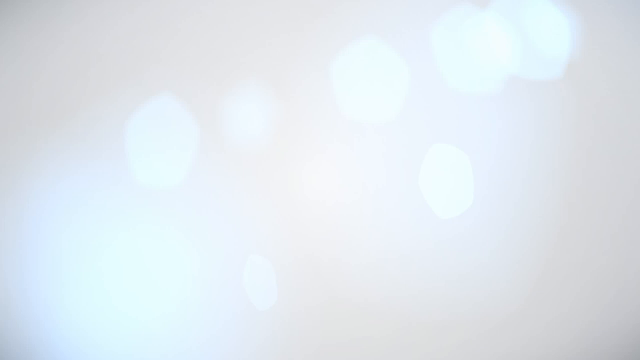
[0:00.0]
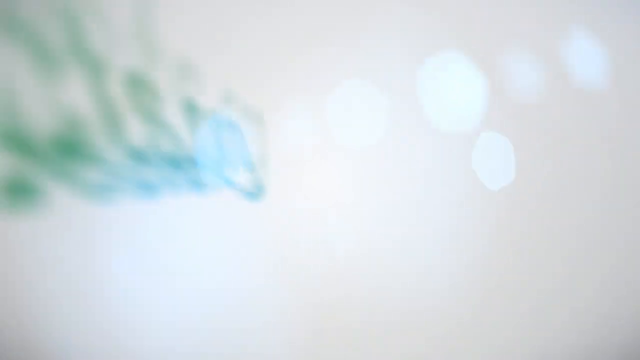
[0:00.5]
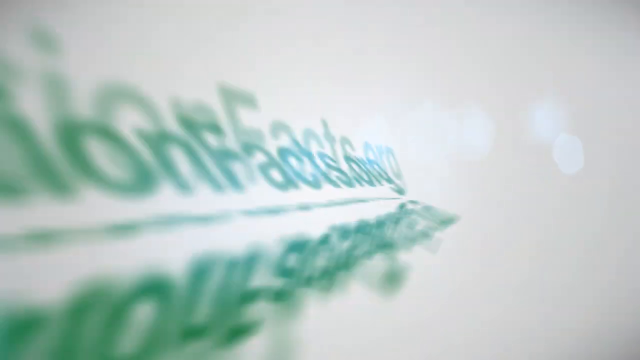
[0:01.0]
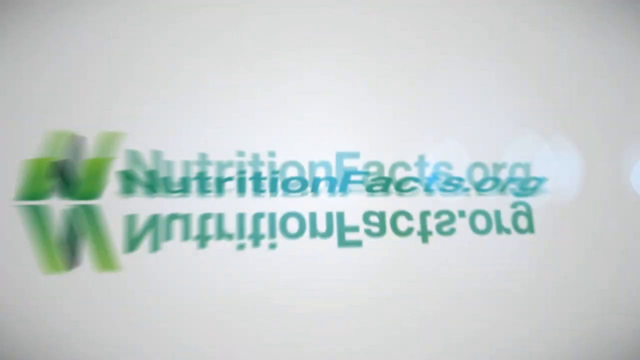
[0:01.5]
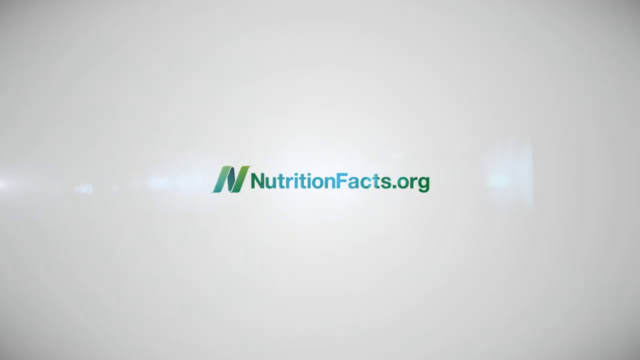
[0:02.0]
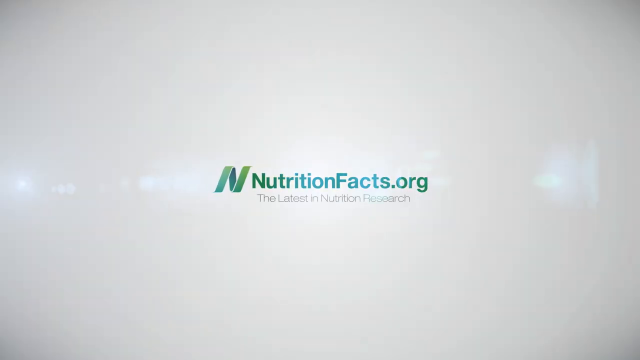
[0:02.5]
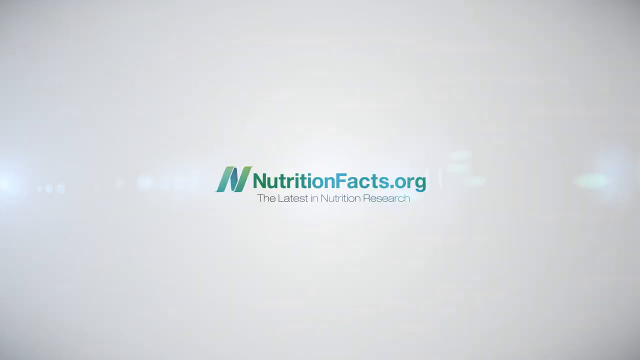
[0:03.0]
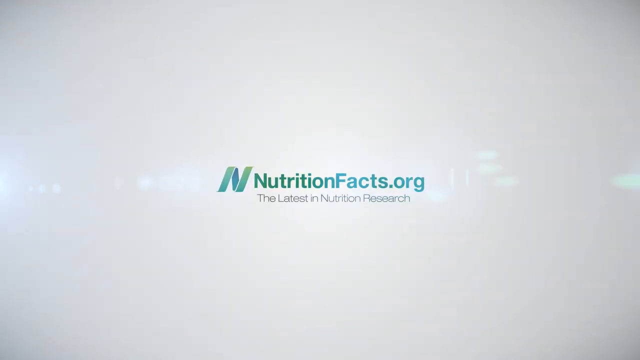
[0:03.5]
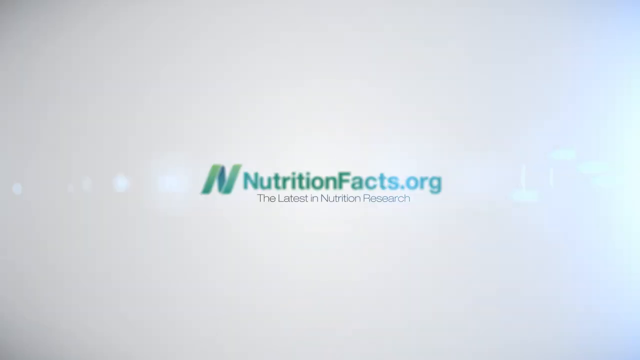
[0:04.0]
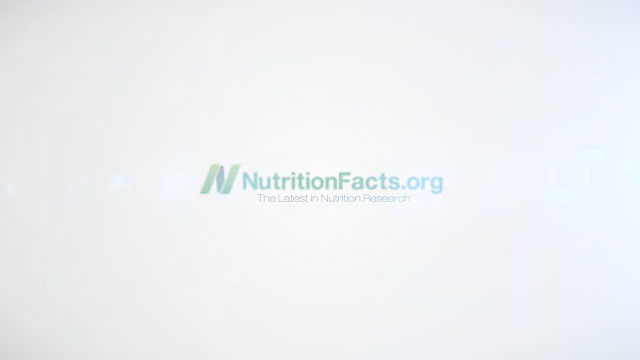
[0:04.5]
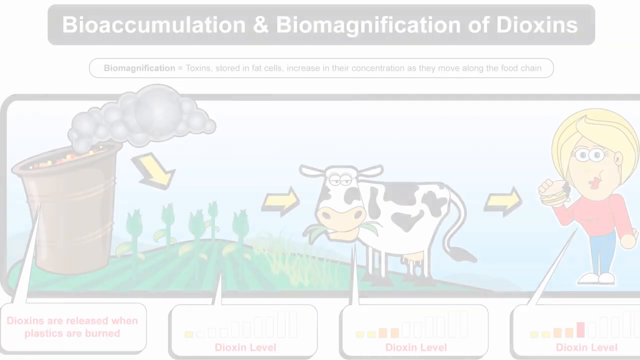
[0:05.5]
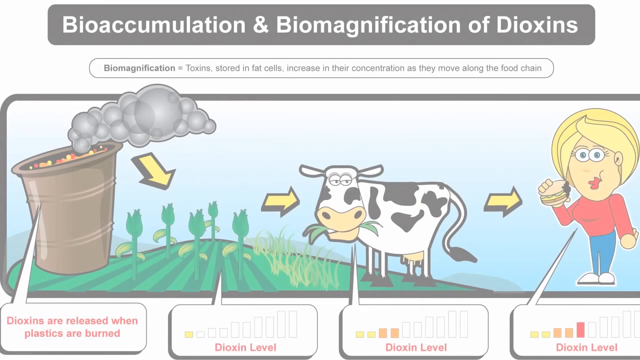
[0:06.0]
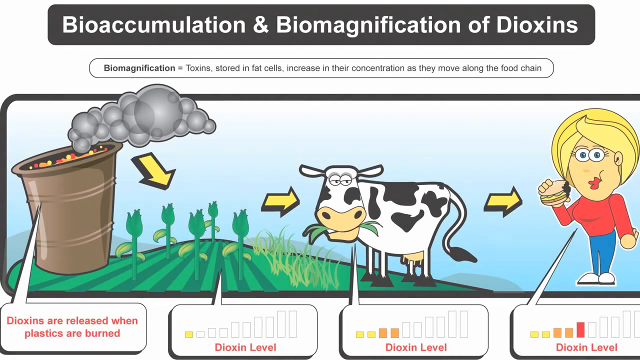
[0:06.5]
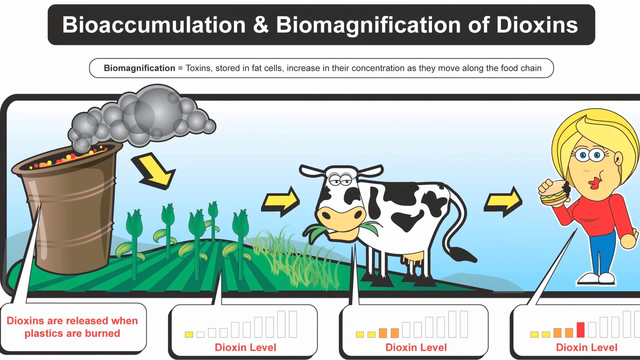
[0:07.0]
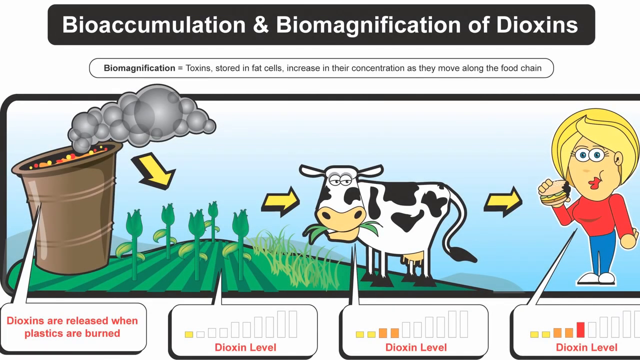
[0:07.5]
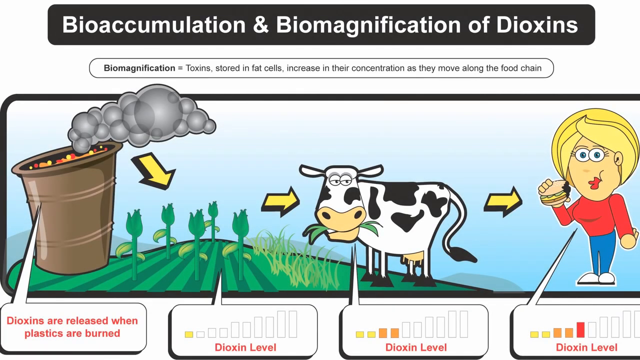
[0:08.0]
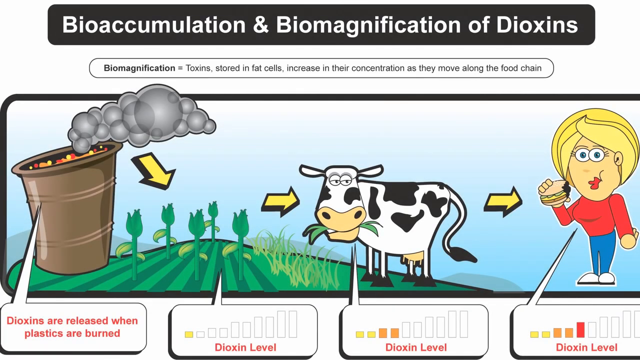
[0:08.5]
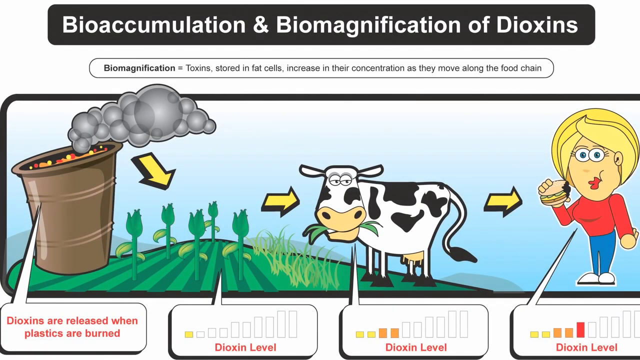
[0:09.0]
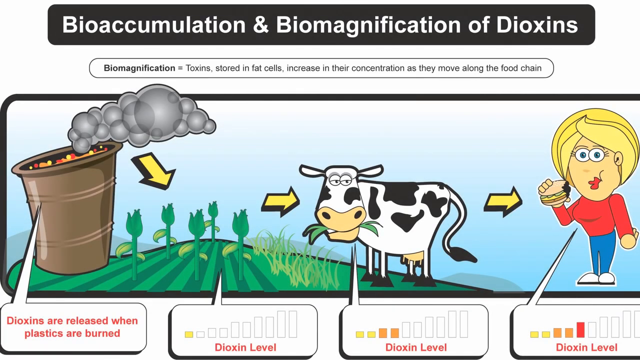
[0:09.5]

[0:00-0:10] A white screen shows a green letter "n" in the middle, with "nutritionfacts.org" to its right. Another screen follows. At the top it reads "bioaccumulation and biomagnification of dioxins," and underneath it says "biomagnification toxins stored in fat cells increase in their concentration as they move along the food chain." Below that is a cartoon of a black-and-white cow in the middle of the screen. Its body faces right, but its head faces the camera and it looks at the camera. It stands on a cartoon grass hill. To the right of the screen, in front of the cow, is a bucket holding red, orange and yellow stuff, with bubbles that look like smoke coming off it. Behind the cow, on the right side of the screen, is a cartoon woman with blonde hair. She wears a long-sleeve red shirt, blue pants and white shoes, and holds a hamburger in her right hand up close to her head. She has big round eyes, and her mouth looks like she is chewing.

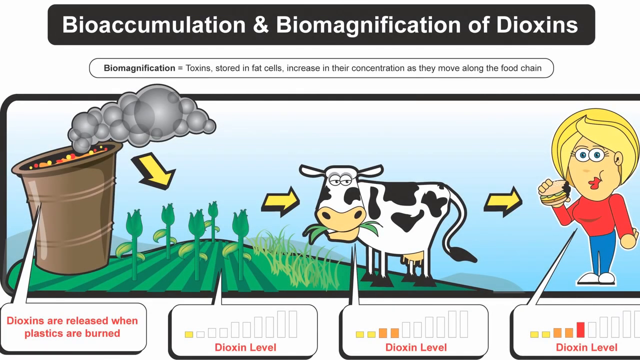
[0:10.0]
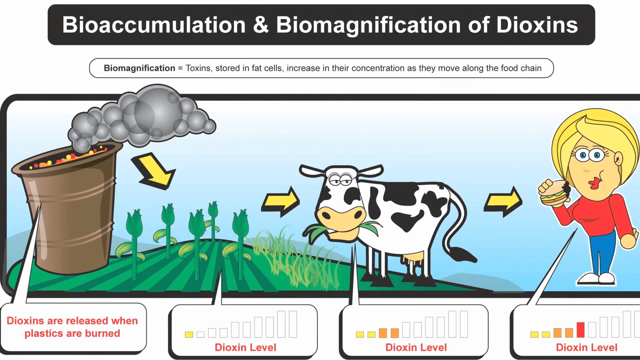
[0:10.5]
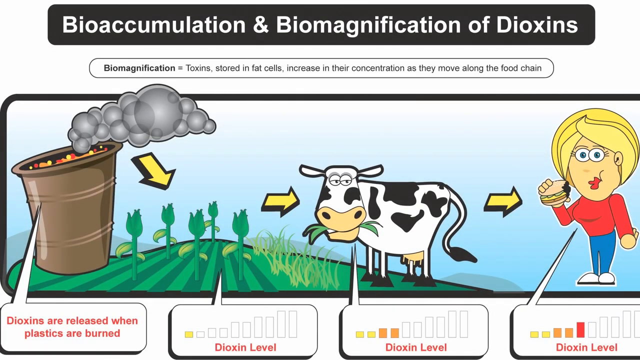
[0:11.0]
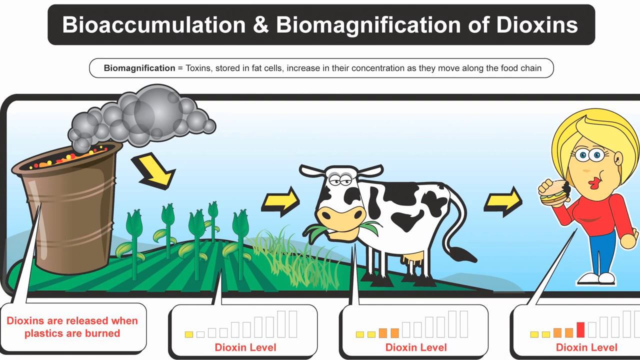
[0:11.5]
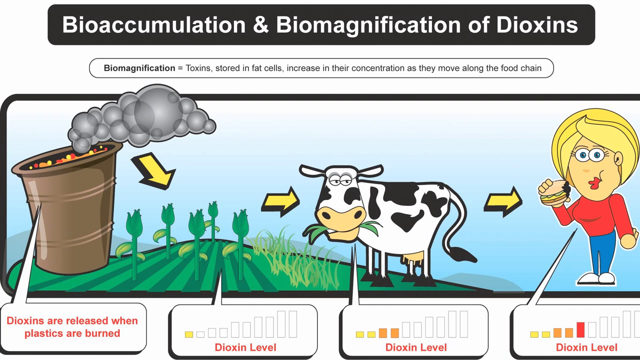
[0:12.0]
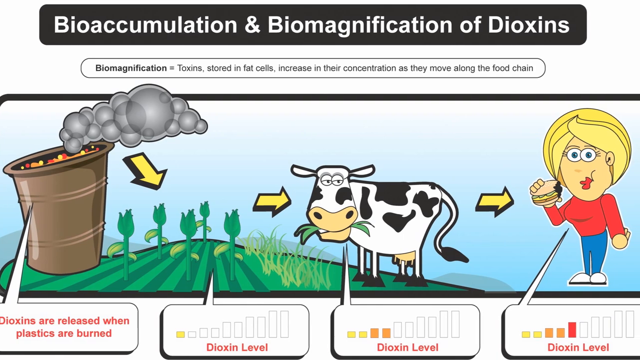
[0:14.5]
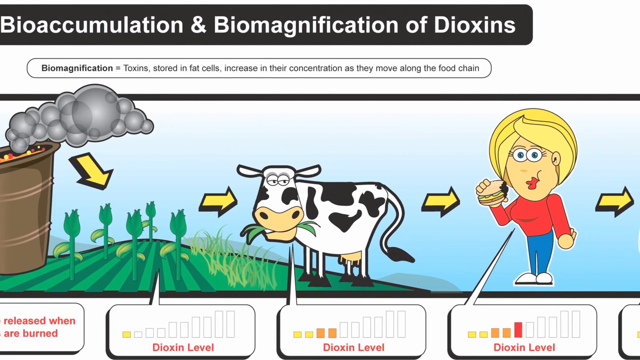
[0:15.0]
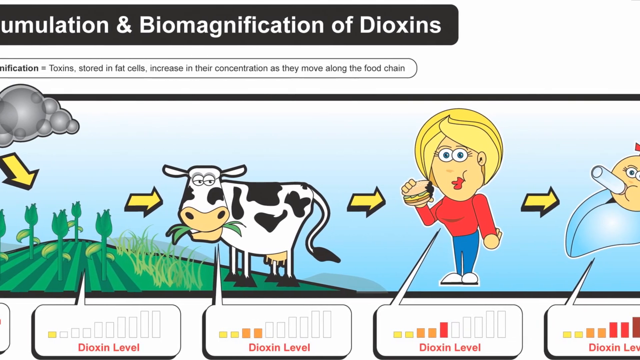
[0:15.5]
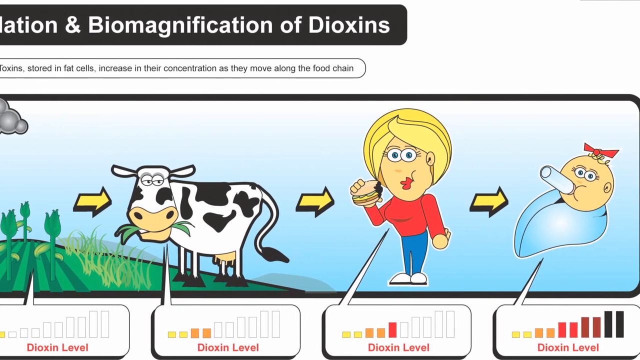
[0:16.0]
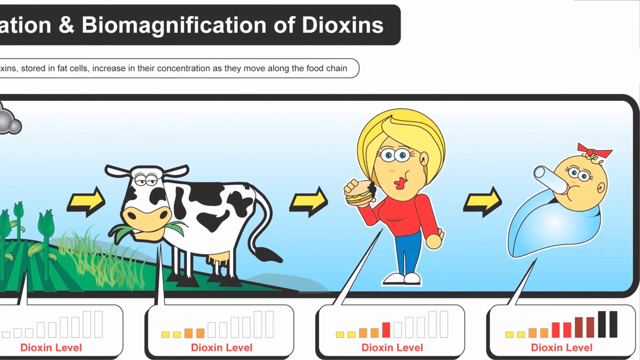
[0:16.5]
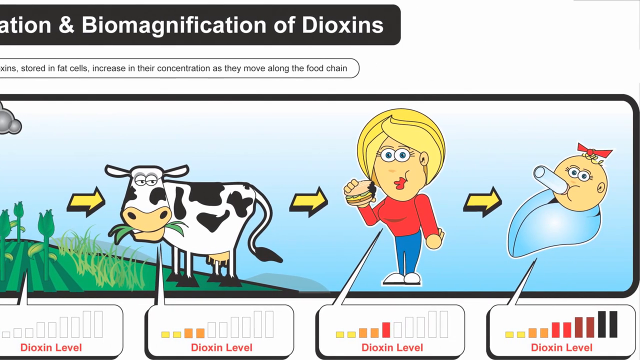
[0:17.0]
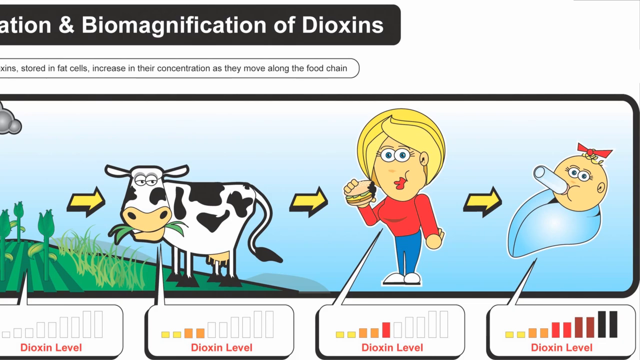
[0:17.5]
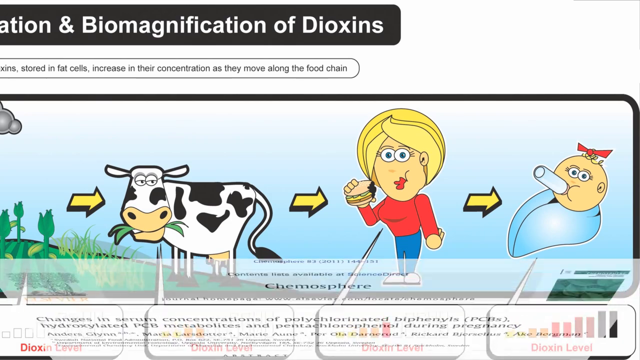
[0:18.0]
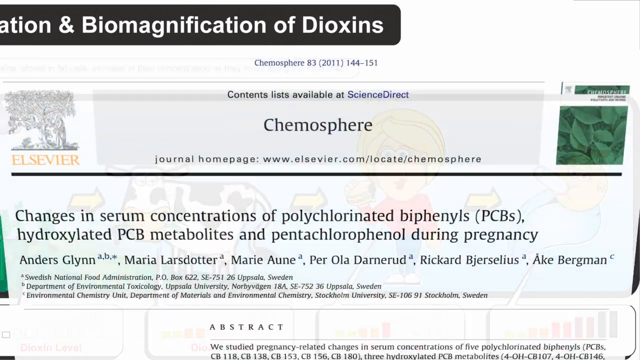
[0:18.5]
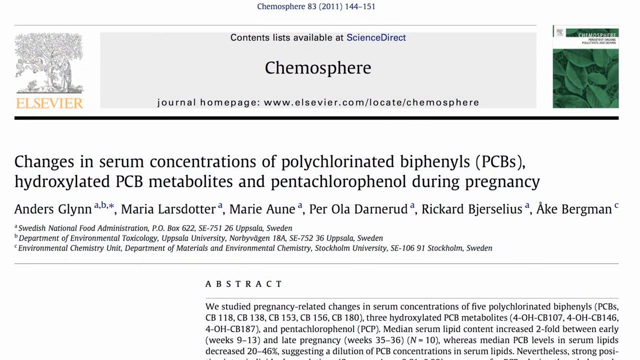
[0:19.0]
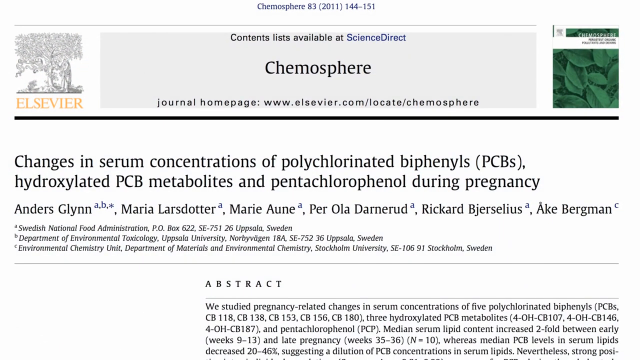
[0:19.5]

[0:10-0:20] Along the top of the screen is the text "bioaccumulation and biomagnification of dioxins," and underneath it says "biomagnification equals toxins stored in fat cells increase in their concentration as they move along the food chain." Below that is a cartoon drawing. On the left side is a bucket holding orange, red and yellow stuff, with smoke drawn as a bunch of gray circles coming out of it, sitting on a grassy hill. To its right is a cartoon cow with grass in its mouth, looking at the camera. To the right of the cow is a cartoon woman with blonde hair, holding a hamburger in her right hand up to her face and wearing a long-sleeve red sweater, blue pants and white shoes. Along the bottom of the screen is the text "dioxins are released when plastics are burned," followed to the right by three labels reading "dioxin level," each with a different graph above it. The camera pans to the right and a cartoon baby appears: just a round head with a bottle in its mouth and a blue blanket wrapped around it.